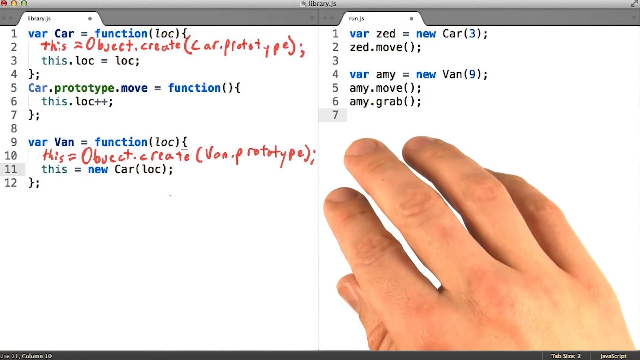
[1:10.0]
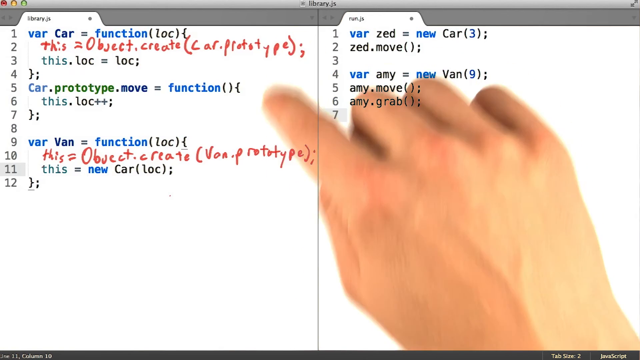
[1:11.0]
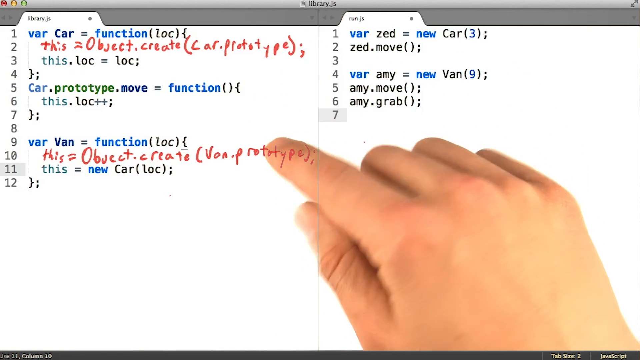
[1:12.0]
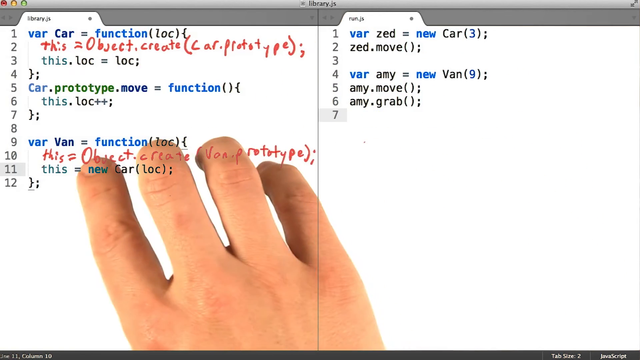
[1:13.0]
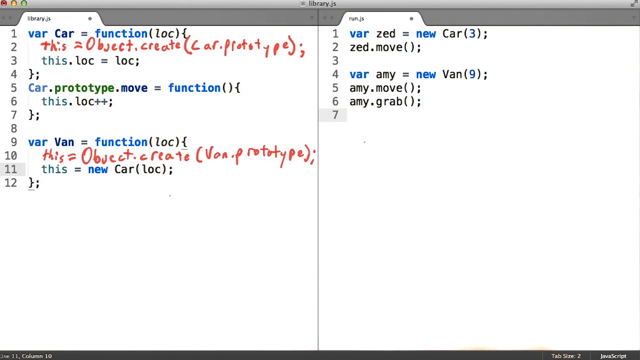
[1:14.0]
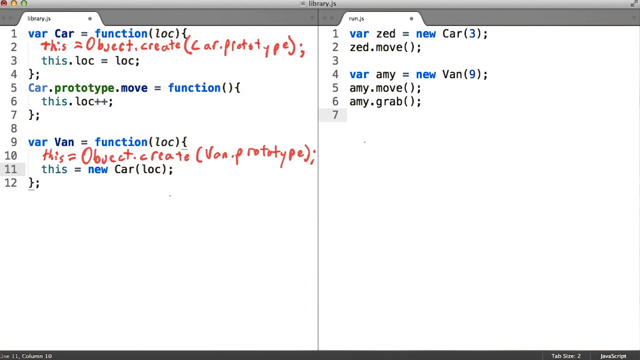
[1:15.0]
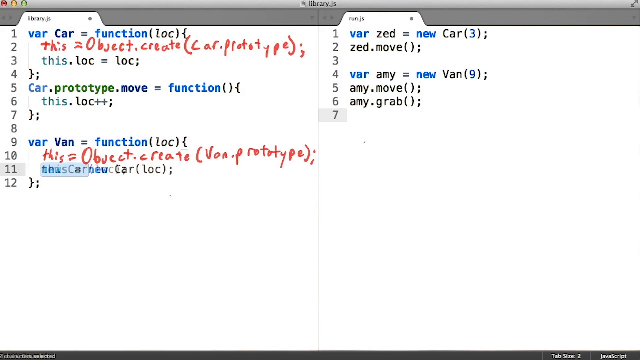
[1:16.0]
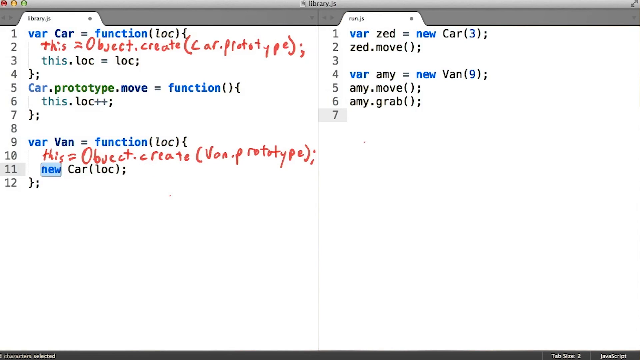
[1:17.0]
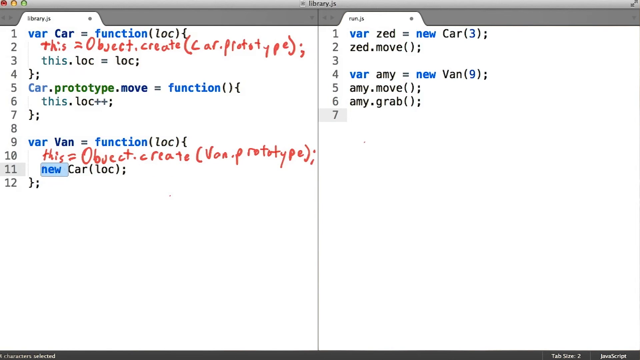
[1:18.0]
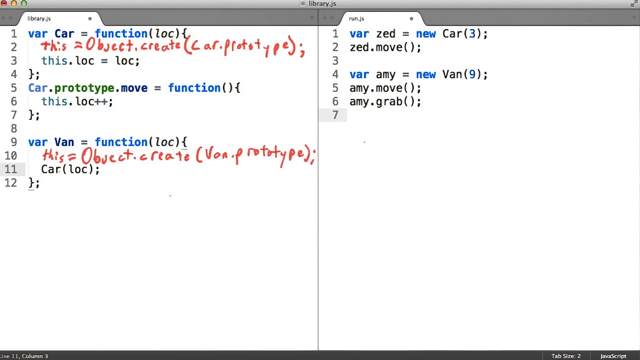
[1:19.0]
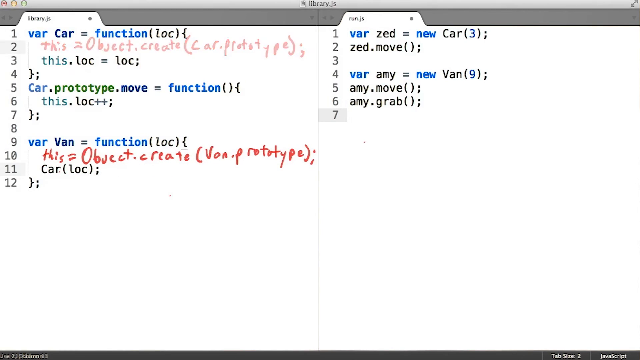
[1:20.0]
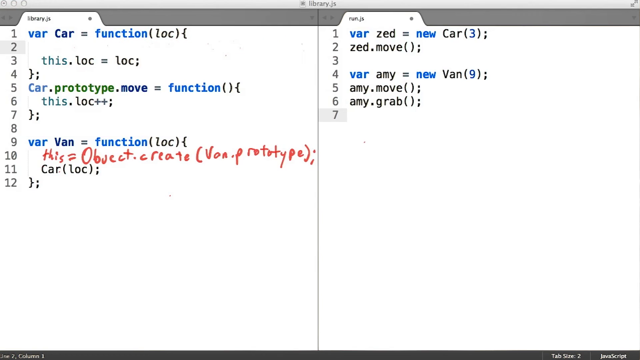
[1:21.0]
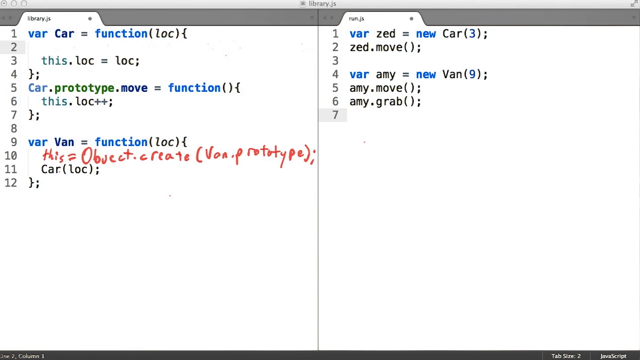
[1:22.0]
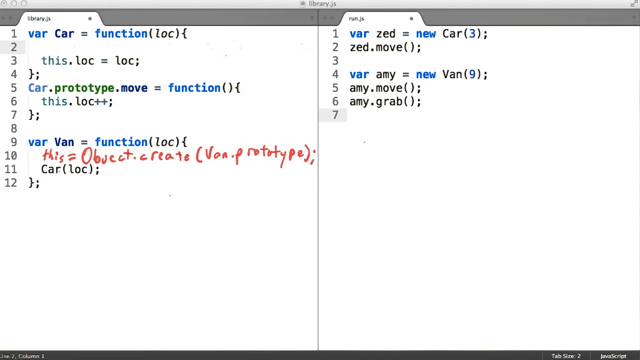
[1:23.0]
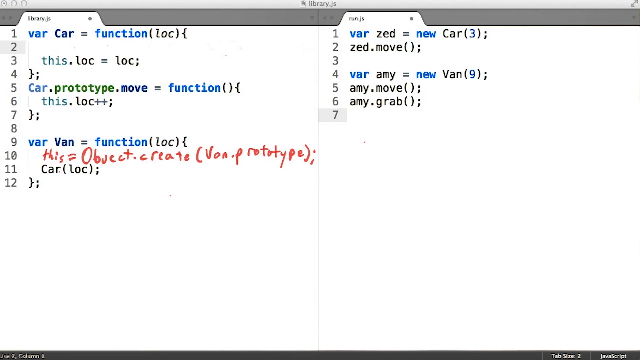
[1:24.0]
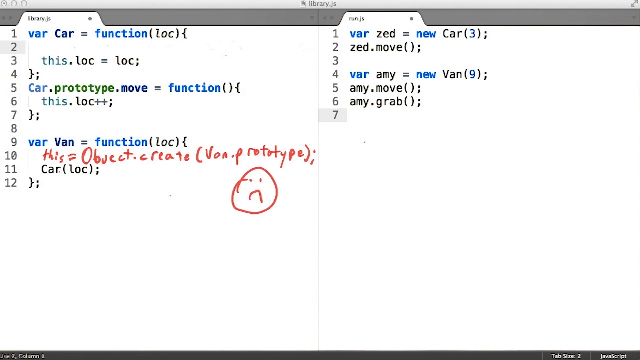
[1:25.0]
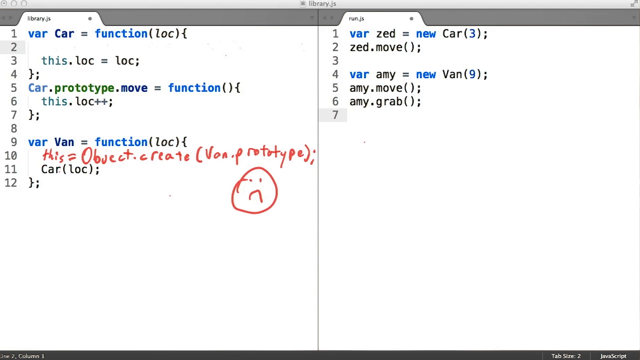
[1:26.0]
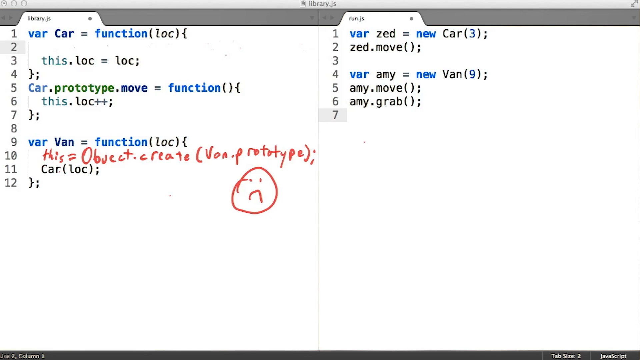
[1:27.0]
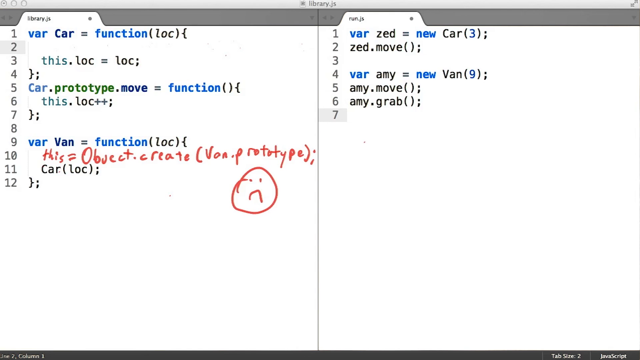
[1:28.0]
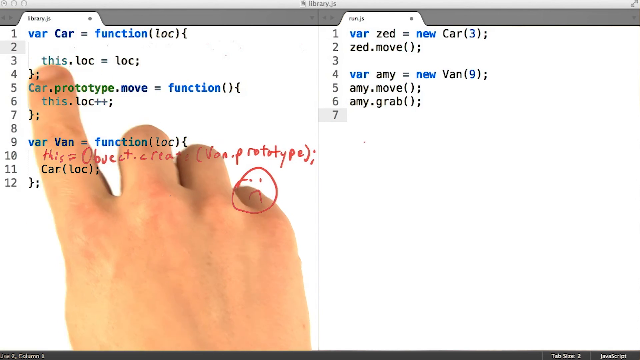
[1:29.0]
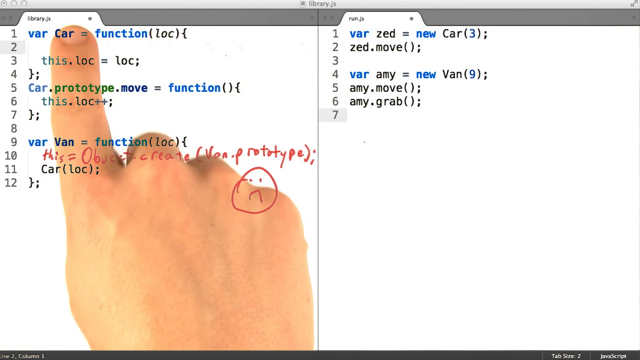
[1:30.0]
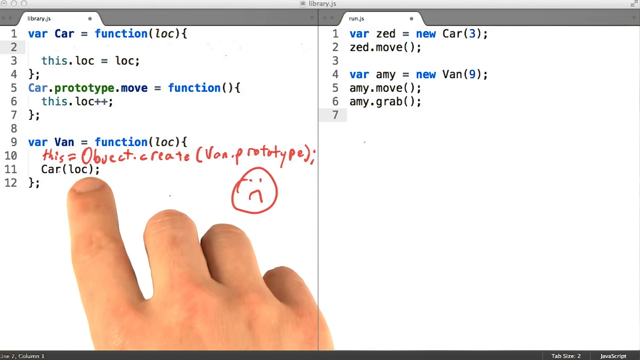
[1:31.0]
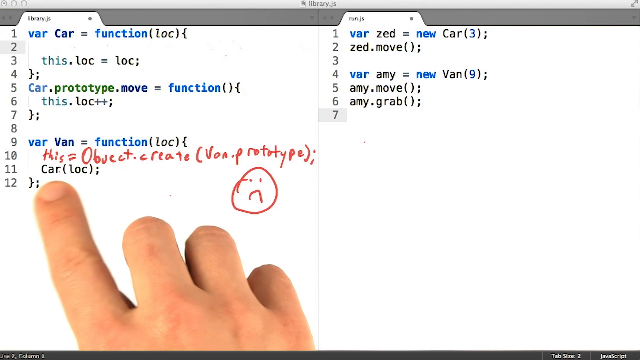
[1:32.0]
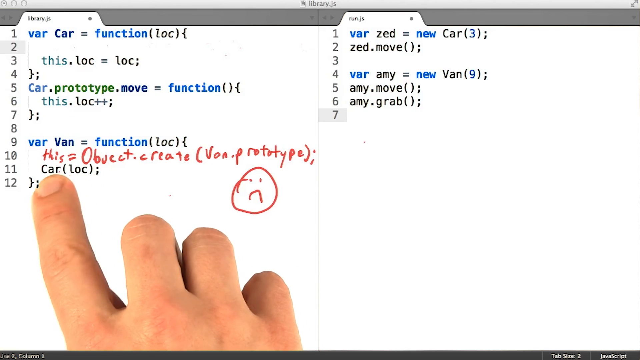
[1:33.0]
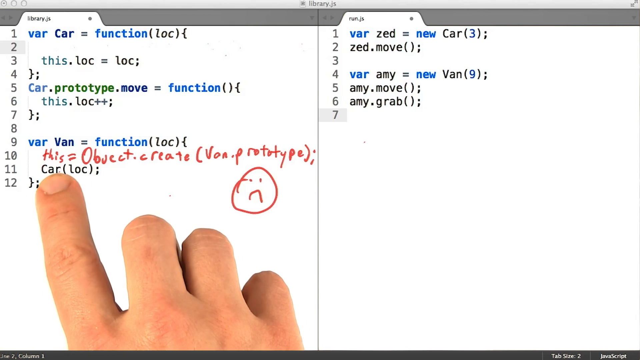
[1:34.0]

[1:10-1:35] The same split screen shows 12 lines of code on the left-hand side and seven lines available on the right-hand side. The person's right hand gestures with the index finger to line 10 and line 2 on the left-hand side, which look handwritten in red ink, indicating some connection between them. Line 10 says "this equals object.create" followed by "van.prototype" in parentheses and a semicolon, and line 2 says "this equals object.create" followed by "car.prototype" in parentheses and a semicolon. On line 11, which said "this equals new car location", text has been changed: "this" and "new" are deleted, so it just says car with "loc" in parentheses. A sad face is drawn in the red marker, the second line of handwritten code has disappeared, and the hand gestures back to line 11.